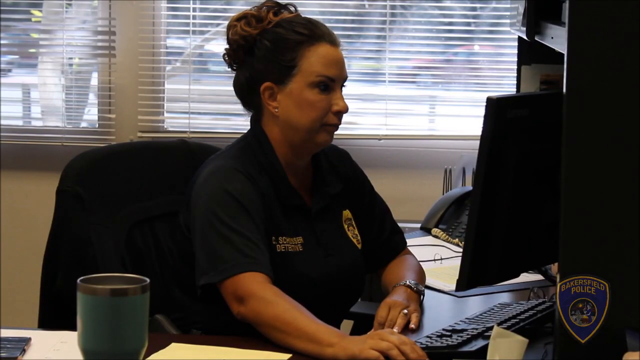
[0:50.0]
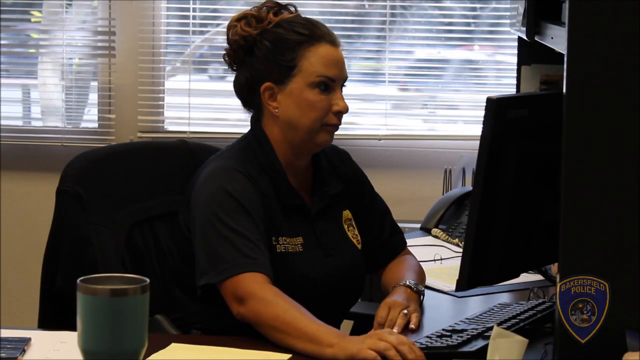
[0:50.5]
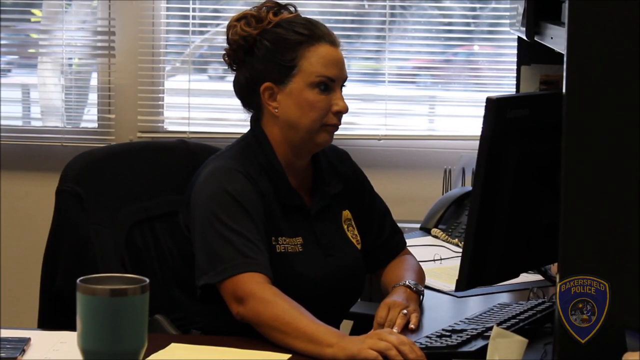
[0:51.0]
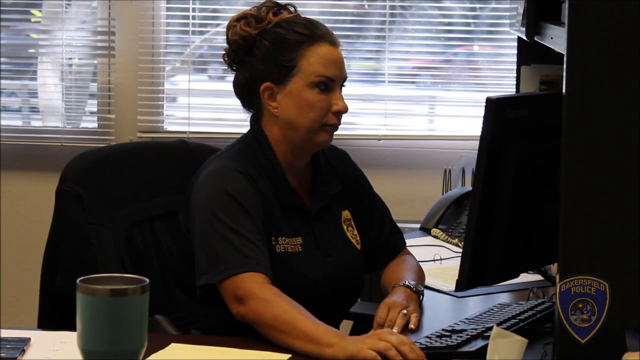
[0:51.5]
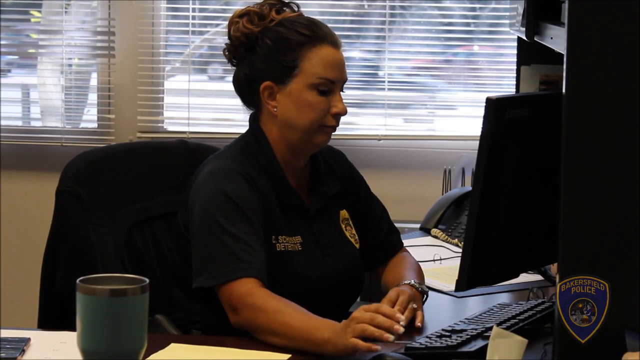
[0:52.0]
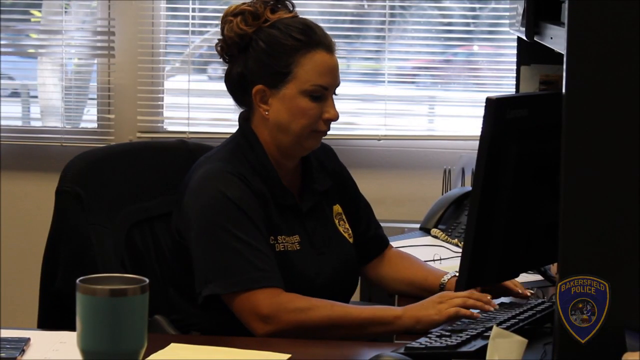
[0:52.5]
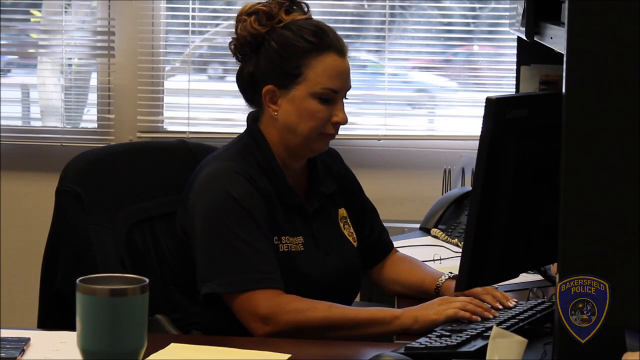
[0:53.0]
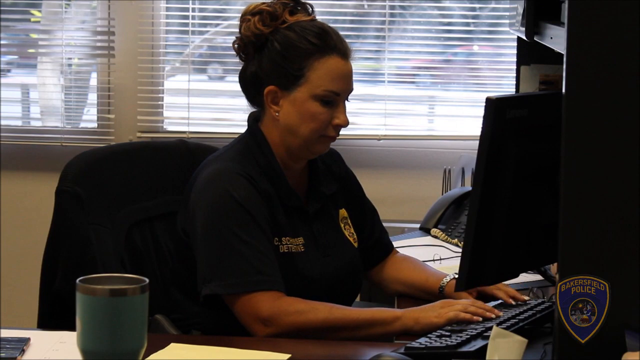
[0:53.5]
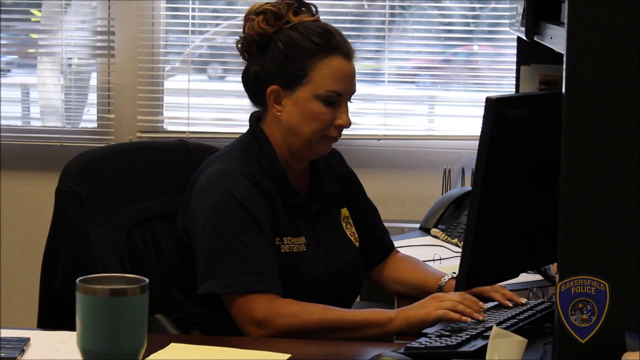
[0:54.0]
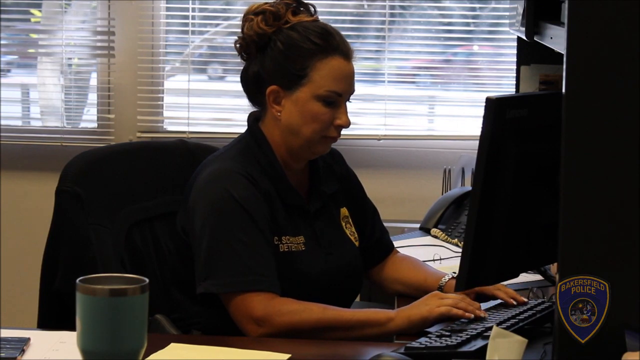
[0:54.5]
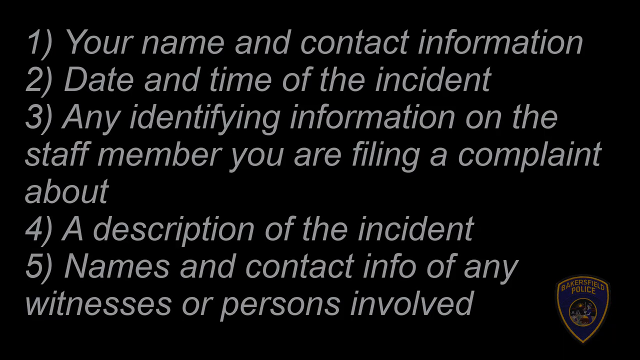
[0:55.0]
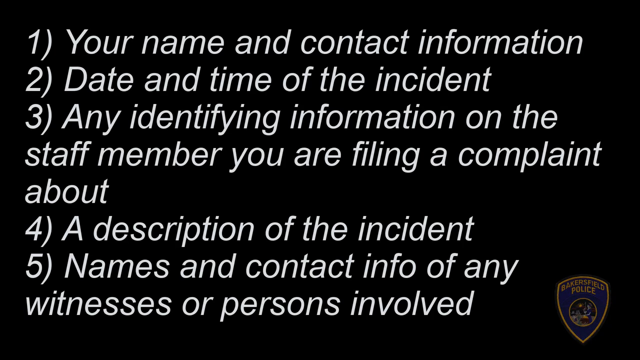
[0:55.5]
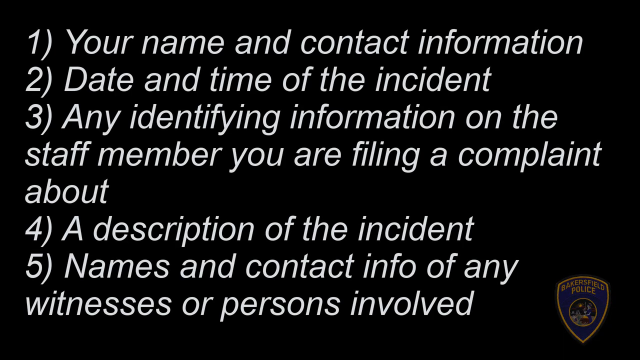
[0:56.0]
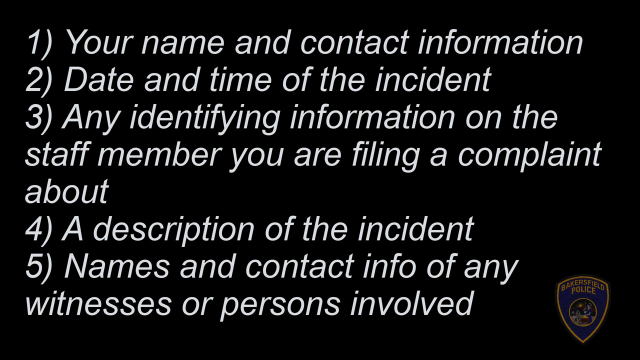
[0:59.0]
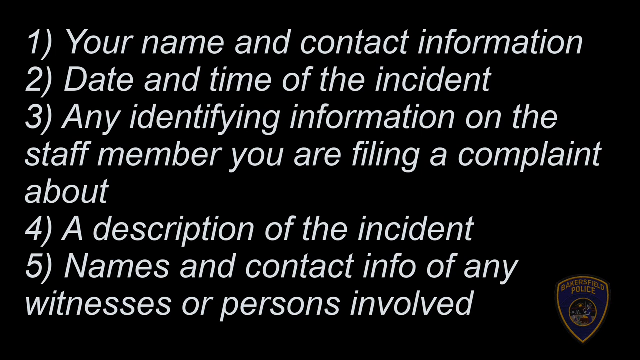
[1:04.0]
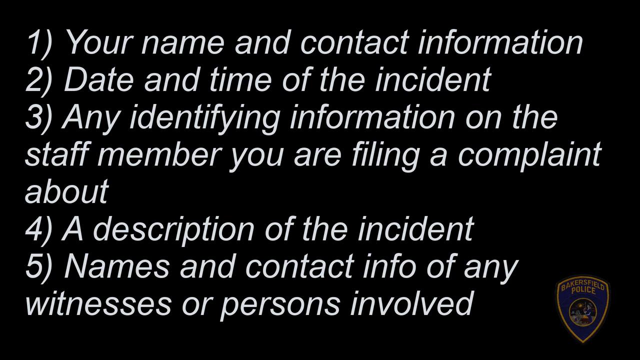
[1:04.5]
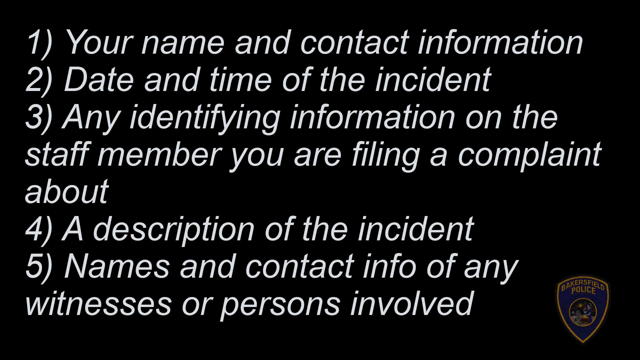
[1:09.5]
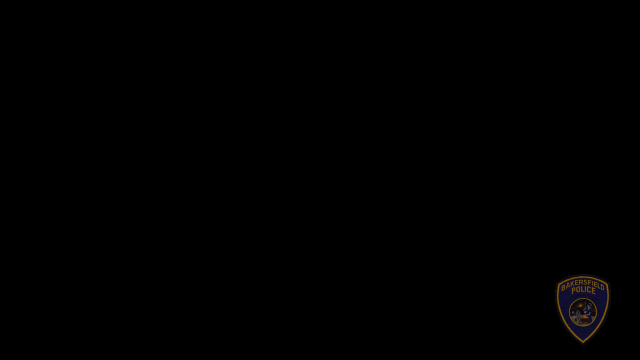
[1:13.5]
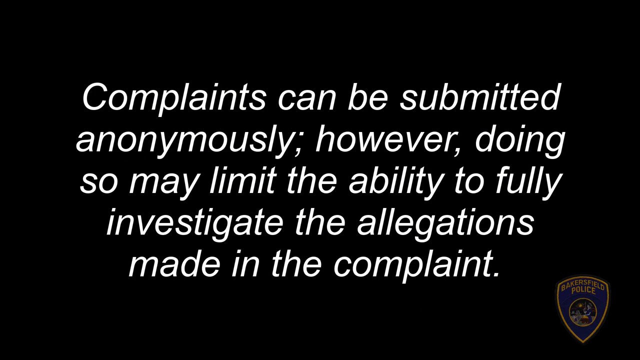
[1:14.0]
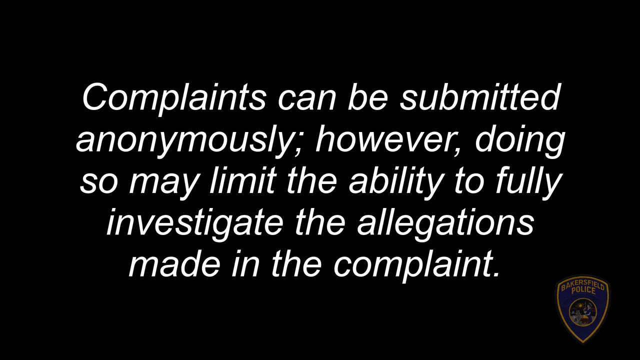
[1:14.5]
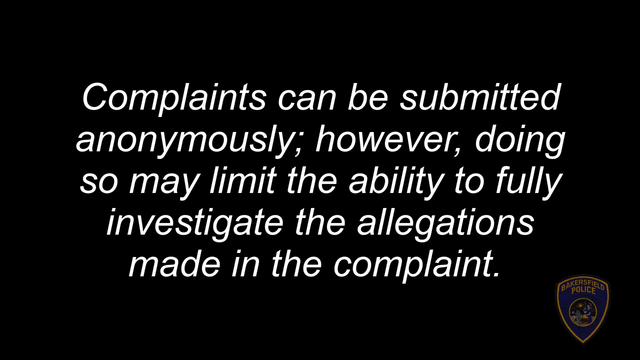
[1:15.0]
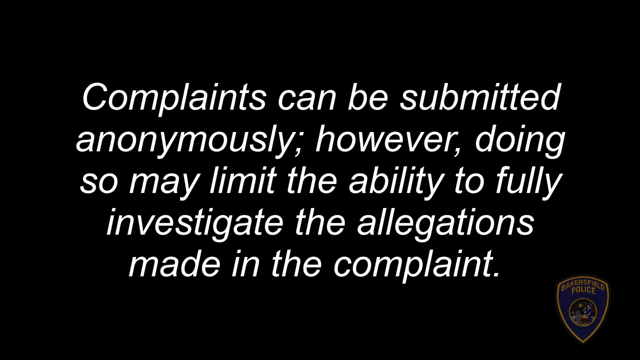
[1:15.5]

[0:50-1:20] A woman sits at a keyboard with a computer screen in front of her and appears to be typing. She wears an official-looking sort of shirt that seems to have a sort of police badge emblem on the left front, and she has a name tag that seems to have the word "detective" below it. Black and white text then appears on the screen as a numbered list: 1, "your name and contact information"; 2, "the date and time of the incident"; 3, "any identifying information on the staff member you're filing your complaint about"; 4, "a description of the incident"; 5, "names and contact info of any witnesses or persons involved". A Bakersfield police logo is at the bottom right. Next the screen reads "complaints can be submitted anonymously. However, doing so may limit the ability to fully investigate the allegations made in the complaint."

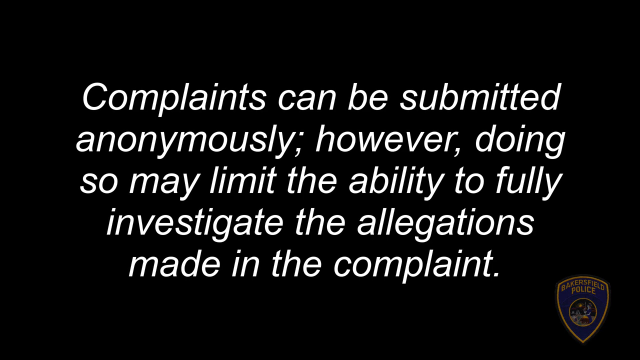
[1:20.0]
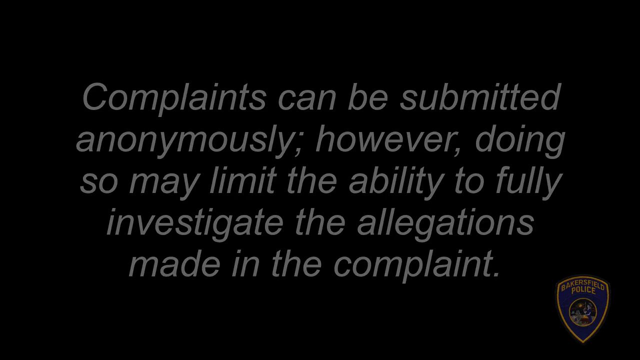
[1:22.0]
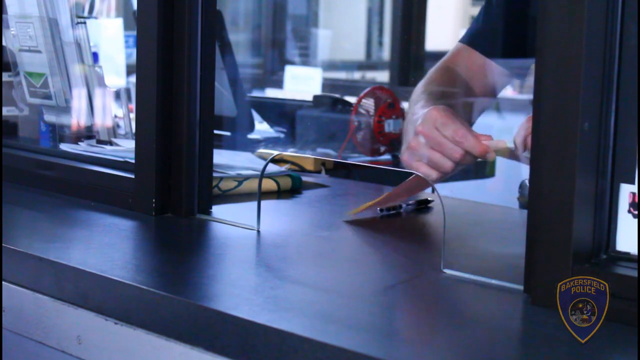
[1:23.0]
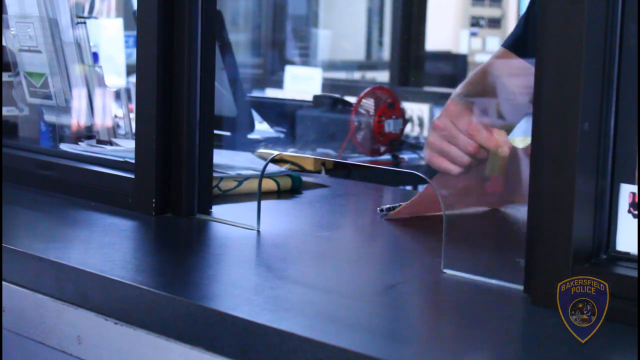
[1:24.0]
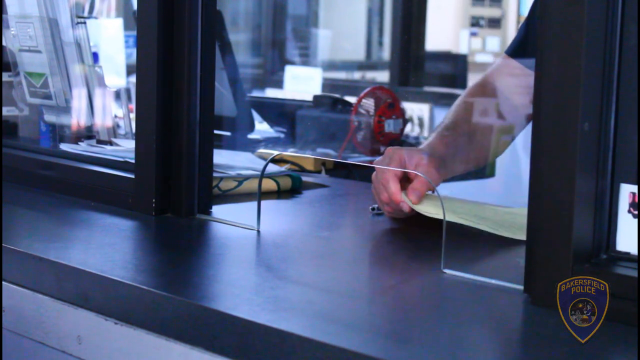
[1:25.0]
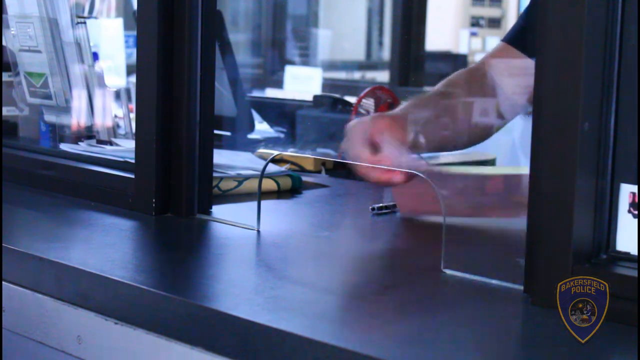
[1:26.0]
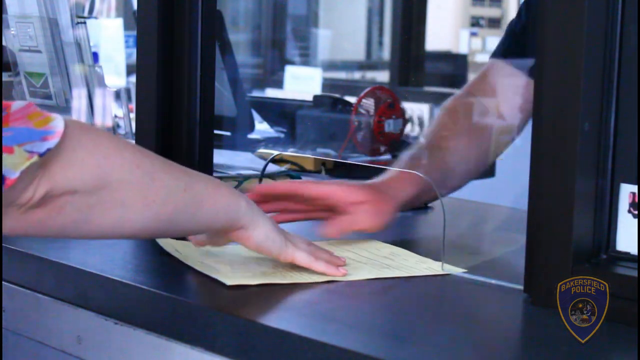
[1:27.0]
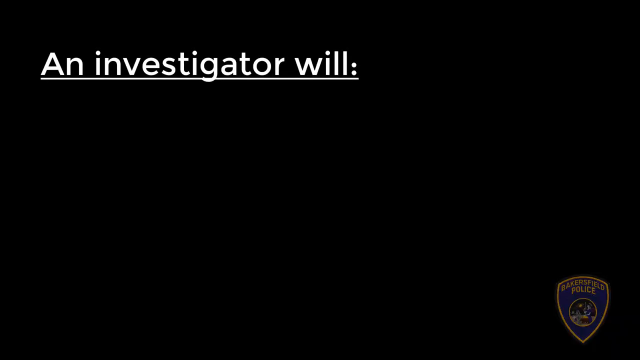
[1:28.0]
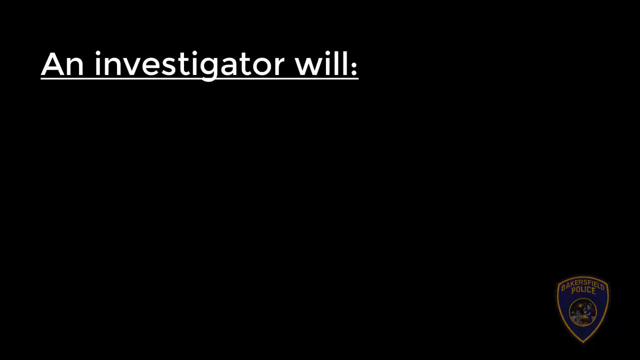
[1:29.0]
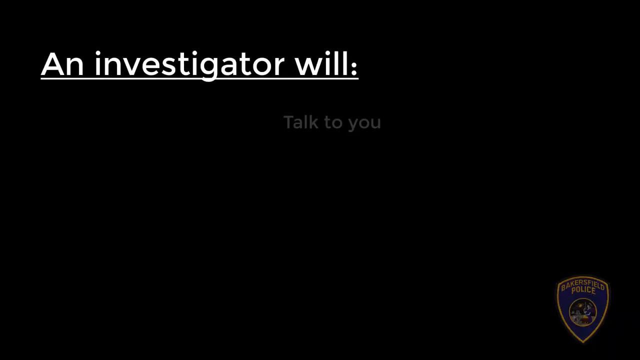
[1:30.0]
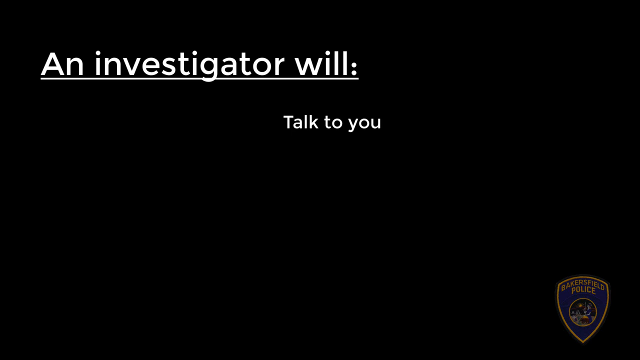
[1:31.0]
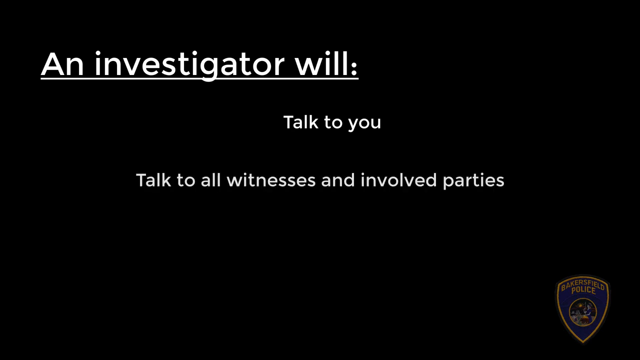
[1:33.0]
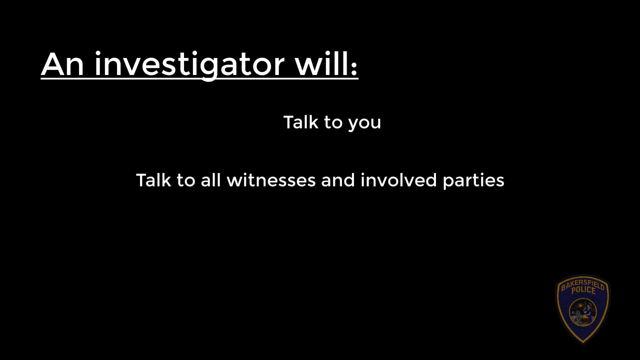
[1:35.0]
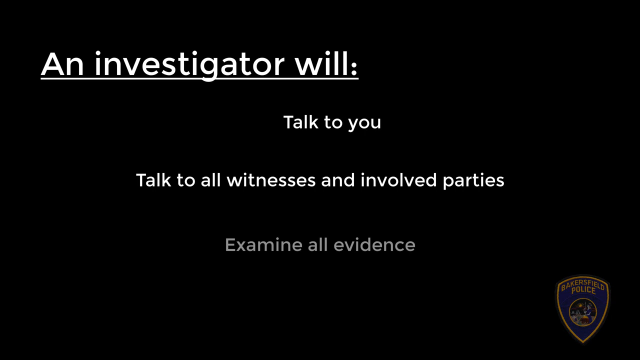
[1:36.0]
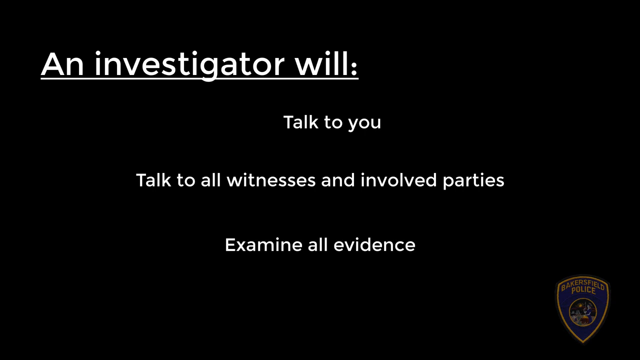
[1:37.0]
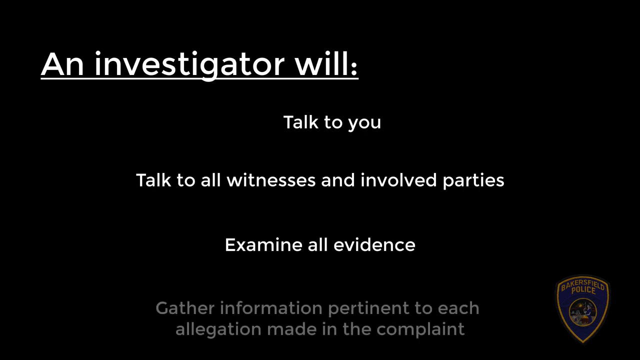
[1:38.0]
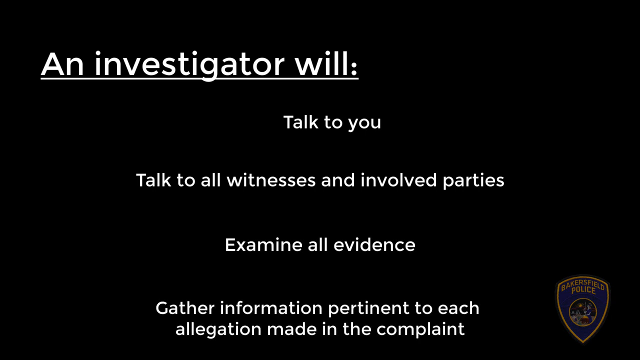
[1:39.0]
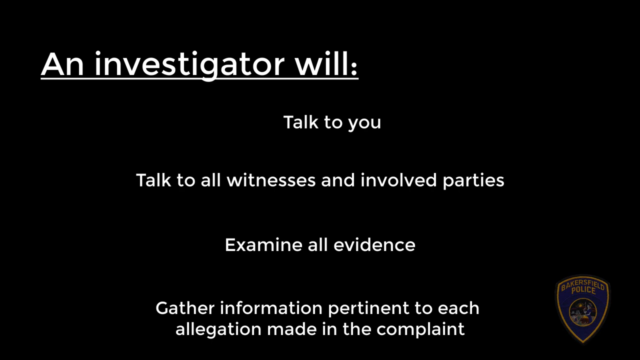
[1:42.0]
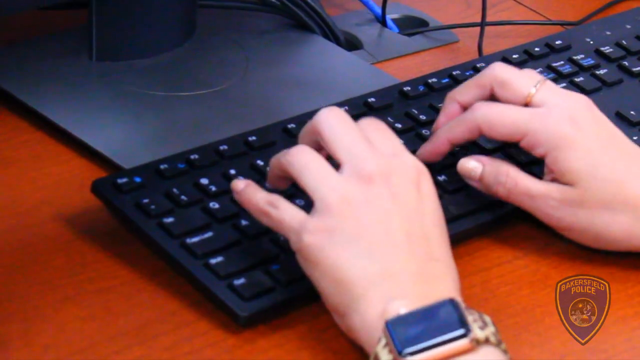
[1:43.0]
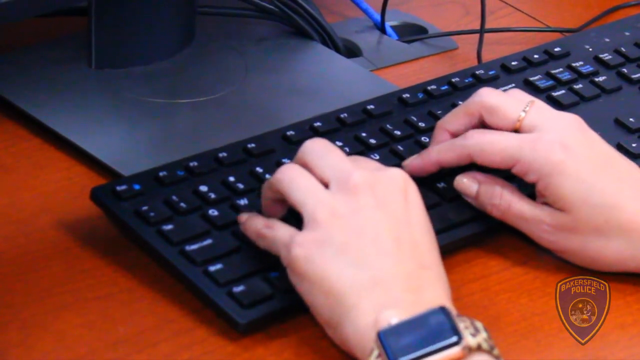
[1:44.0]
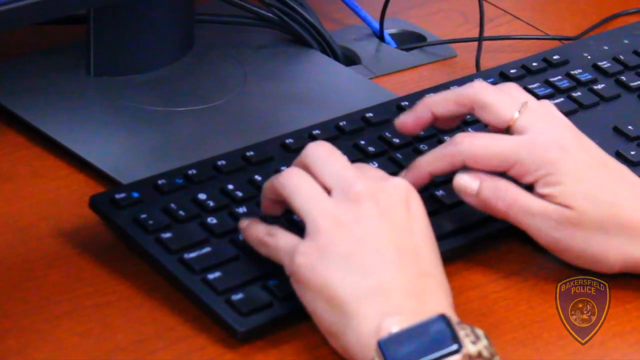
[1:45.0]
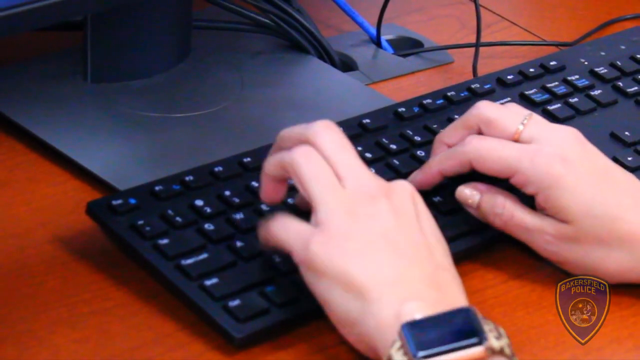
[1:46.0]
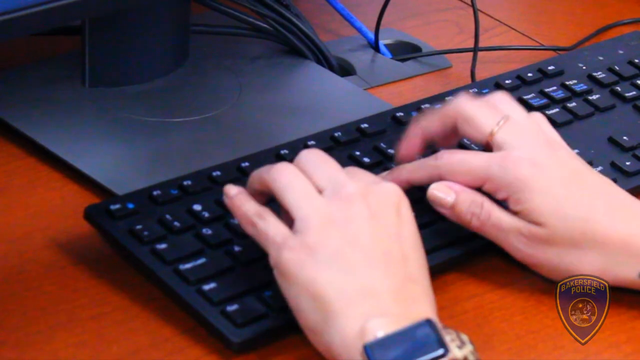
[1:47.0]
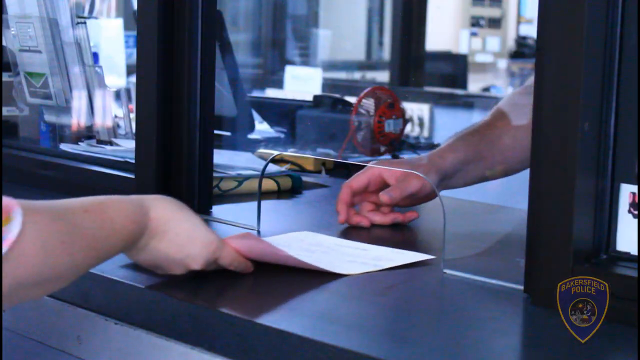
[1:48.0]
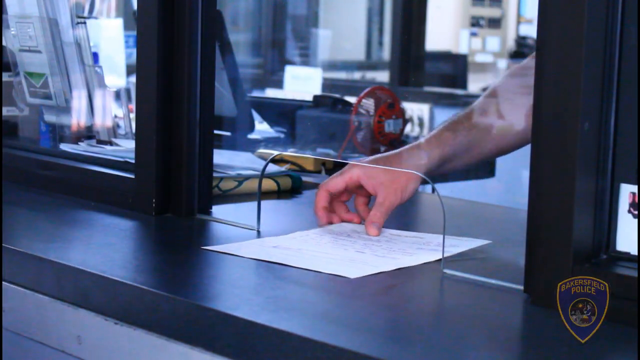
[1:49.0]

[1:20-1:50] A sort of clear glass window with a slot at the bottom is shown. Behind it, someone wearing a dark-colored shirt handles a piece of paper that appears to be at least in duplicate or triplicate, with two different colored papers: yellow on top and pink on the bottom. They seem to hand it out to a person on the other side of the glass, who takes the pink and yellow paper. White writing on a black background then reads "an investigator will: talk to you. Talk to the witnesses involved in all parties, examine all evidence, gather information pertinent to each allegation made in the complaint." Next, someone is typing on a keyboard. The clear window with the hole cut out at the bottom appears, and now somebody takes in a paper from the other side of the window, maybe a report being given to the officer behind the window.